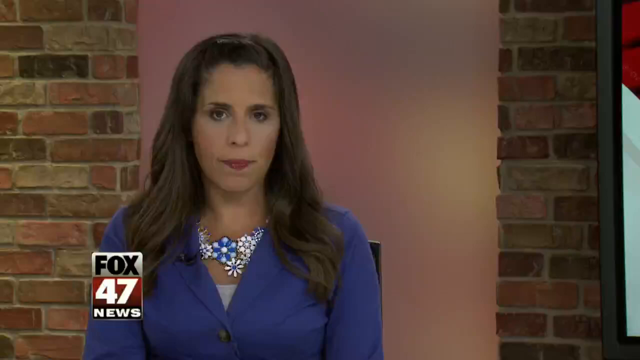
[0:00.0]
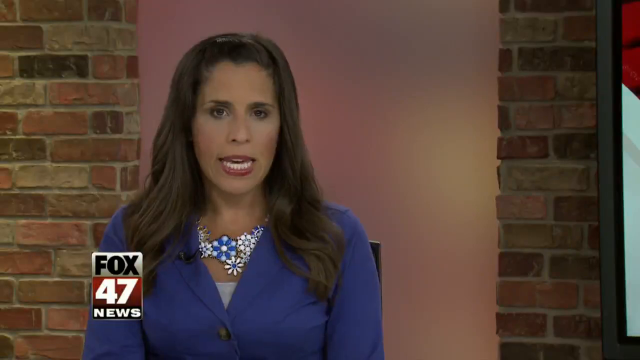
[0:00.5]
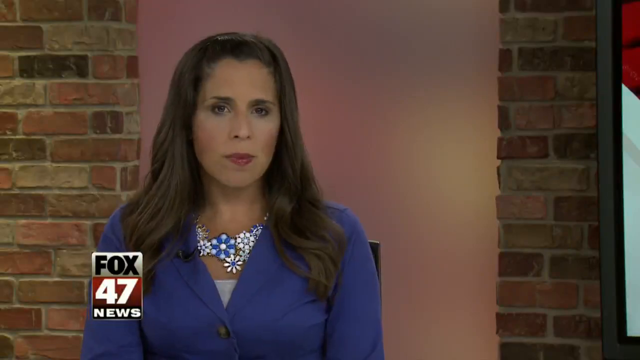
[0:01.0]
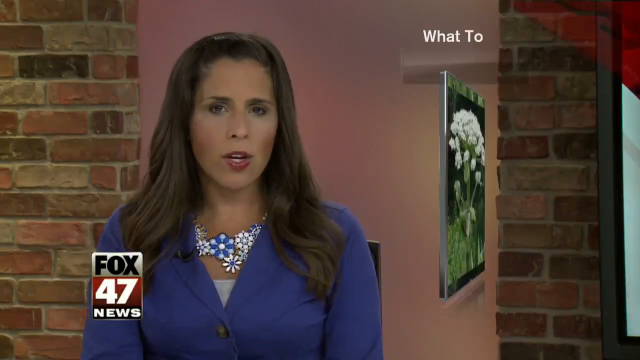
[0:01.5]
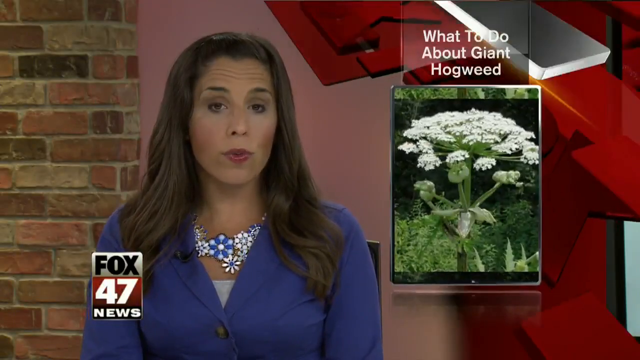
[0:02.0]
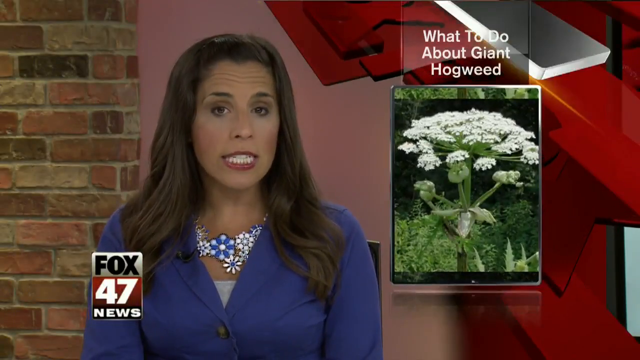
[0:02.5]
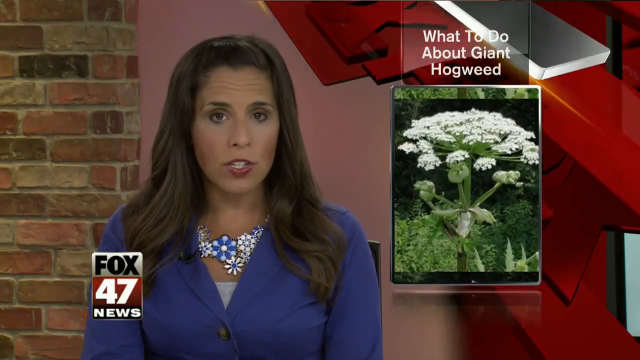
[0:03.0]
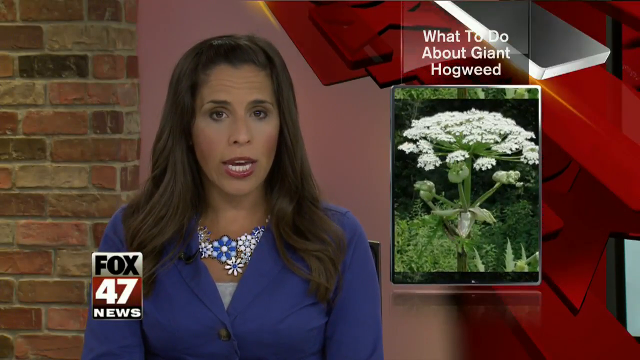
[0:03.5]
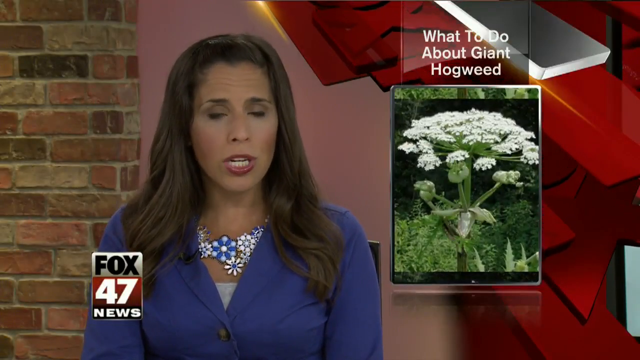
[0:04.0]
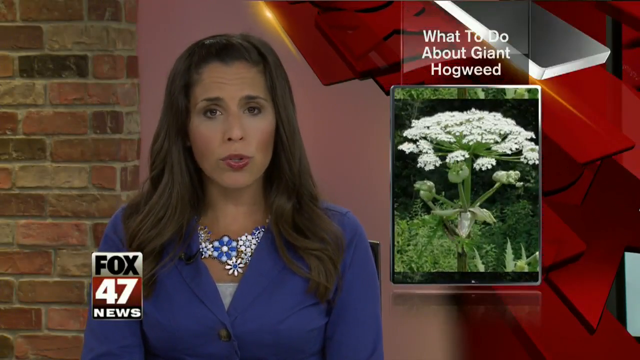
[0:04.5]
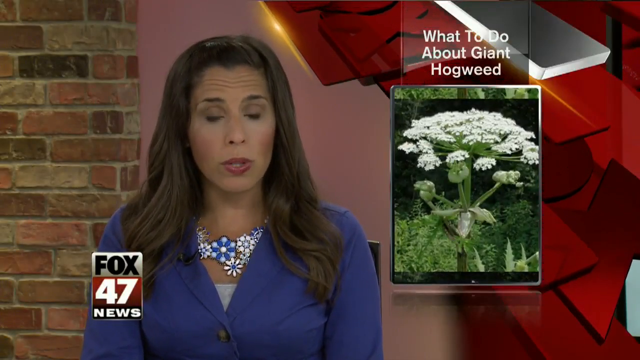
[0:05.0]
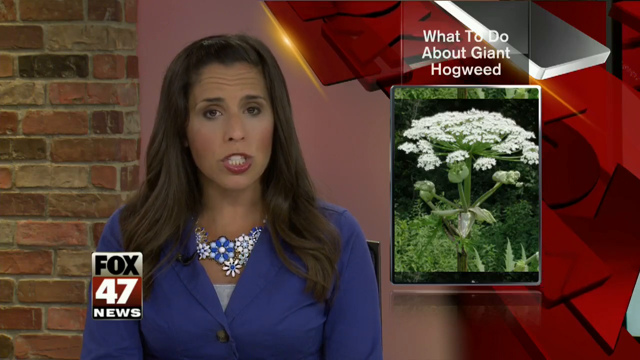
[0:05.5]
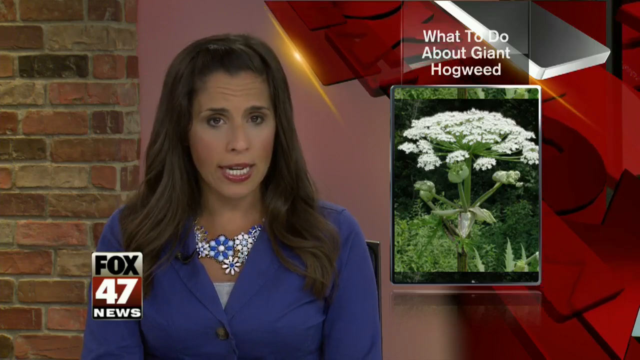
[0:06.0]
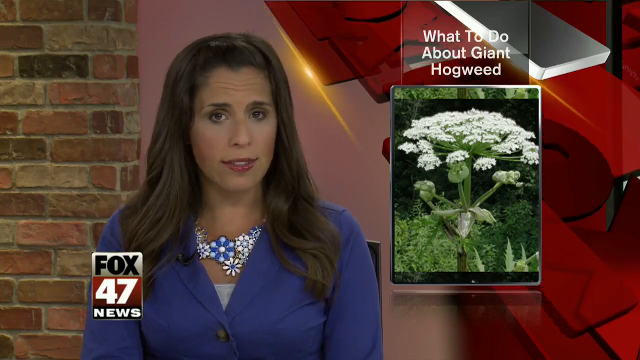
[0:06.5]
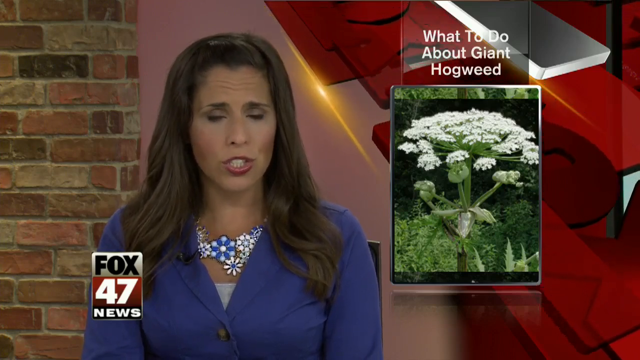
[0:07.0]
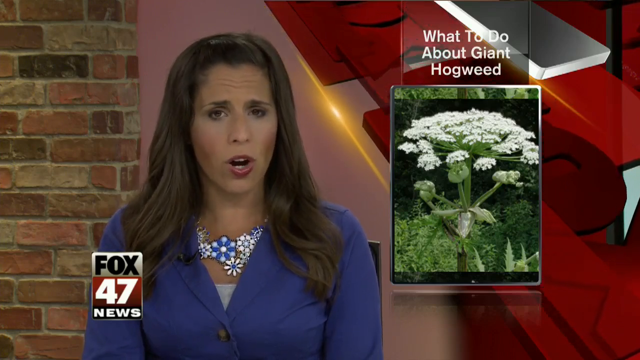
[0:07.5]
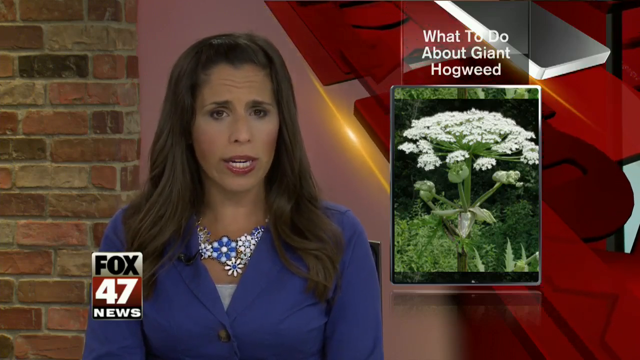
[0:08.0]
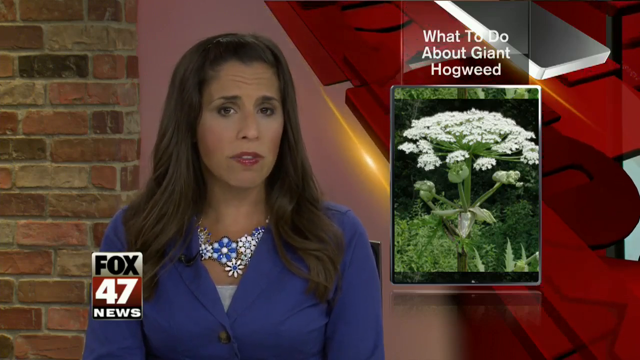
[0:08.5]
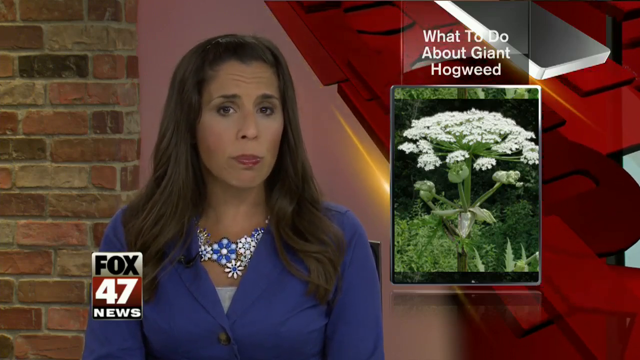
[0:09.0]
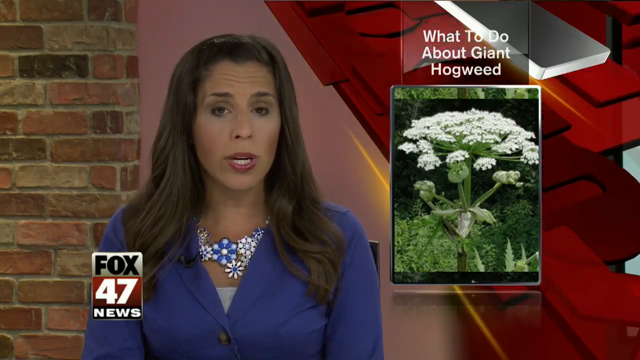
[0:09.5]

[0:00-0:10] A white woman in a blue coat and a blue and white necklace is on screen. Behind her is a background with a solid colored ball, with Facebook on either side of it. The channel name is Fox 47 News. She talks about what to do about giant hogweeds. On the left-hand side of her is a plant with white flowers. She speaks very expressively. On the left-hand side of the screen is a silver and red graphic with a slight gold light on it.